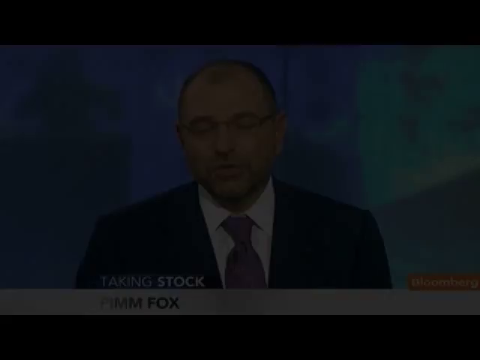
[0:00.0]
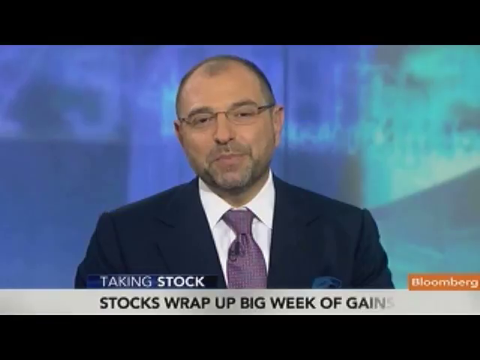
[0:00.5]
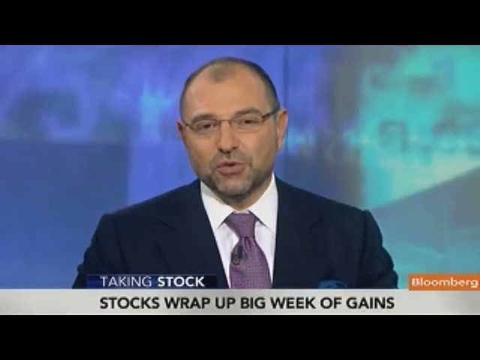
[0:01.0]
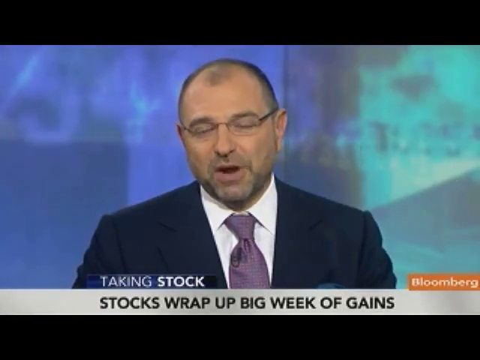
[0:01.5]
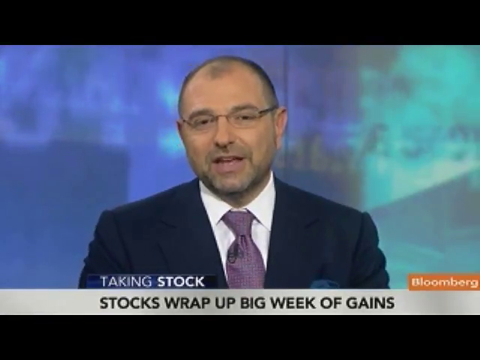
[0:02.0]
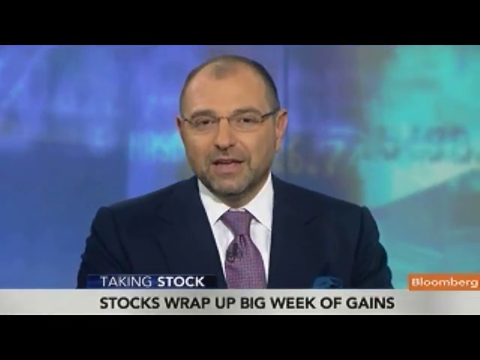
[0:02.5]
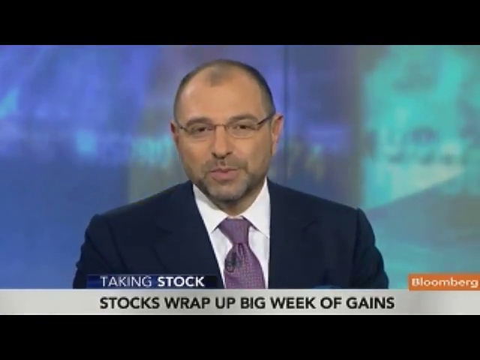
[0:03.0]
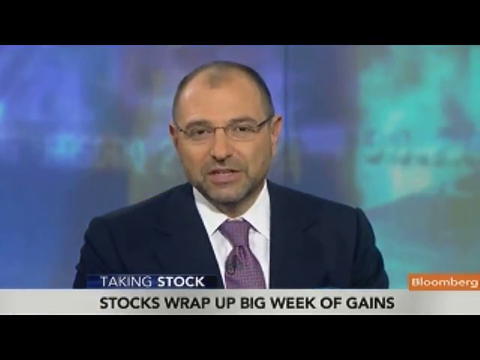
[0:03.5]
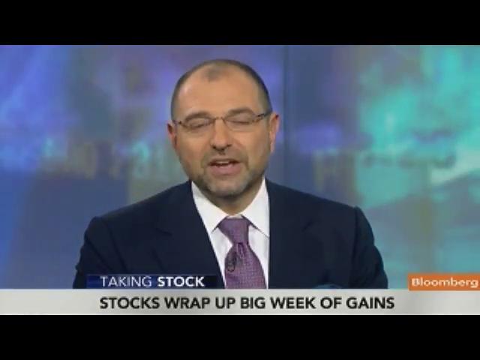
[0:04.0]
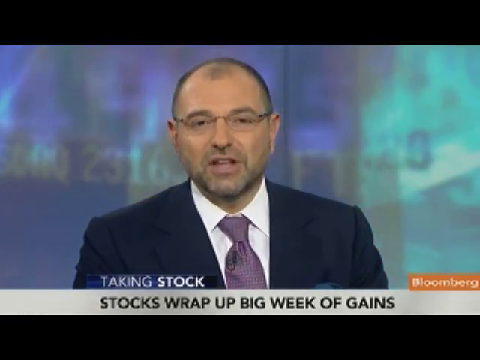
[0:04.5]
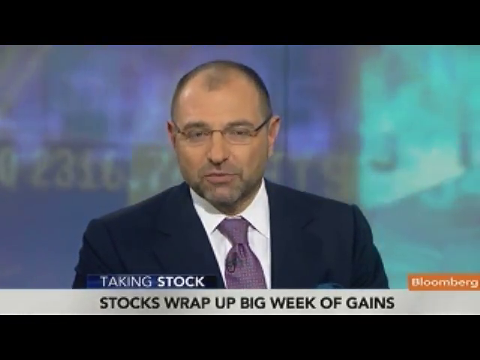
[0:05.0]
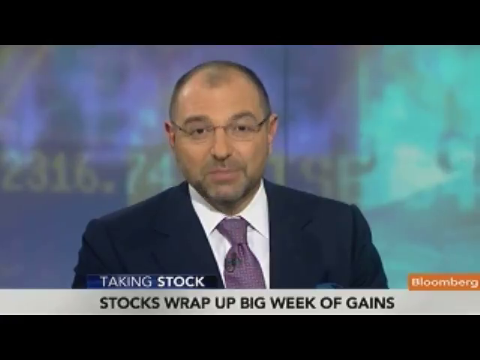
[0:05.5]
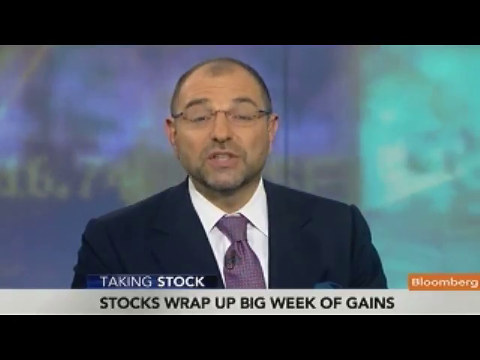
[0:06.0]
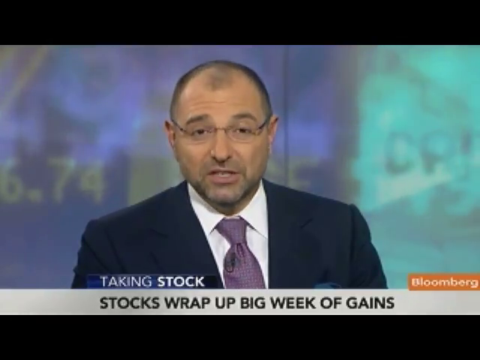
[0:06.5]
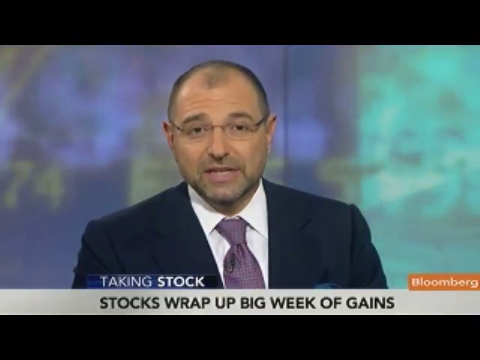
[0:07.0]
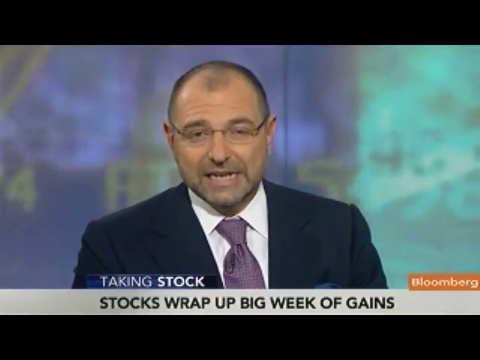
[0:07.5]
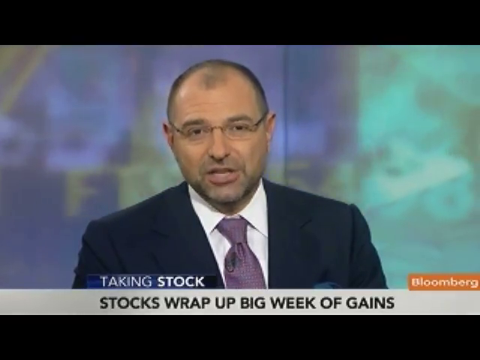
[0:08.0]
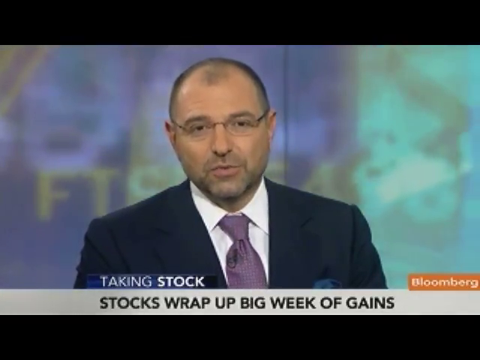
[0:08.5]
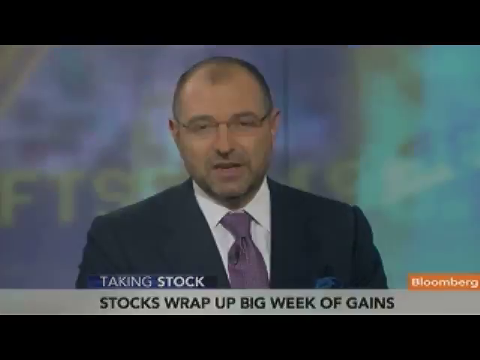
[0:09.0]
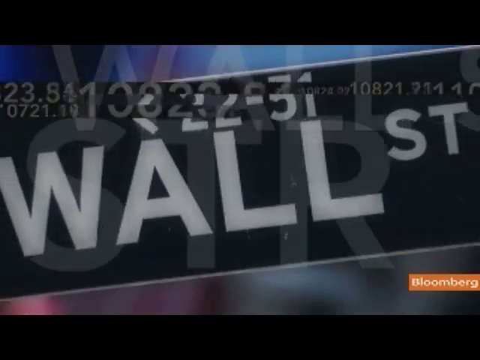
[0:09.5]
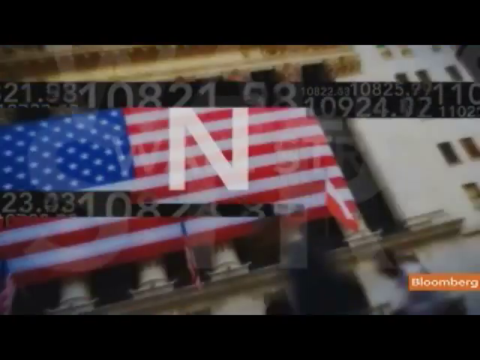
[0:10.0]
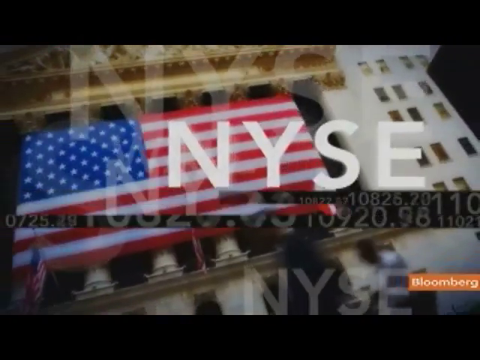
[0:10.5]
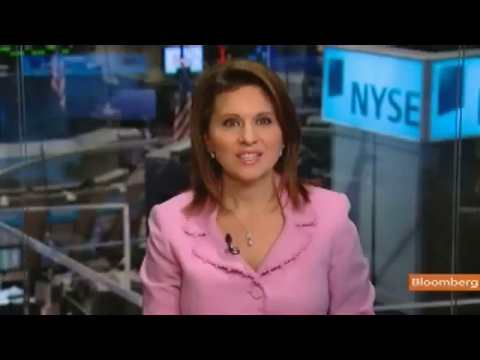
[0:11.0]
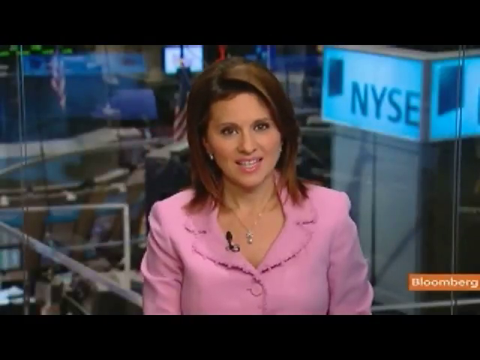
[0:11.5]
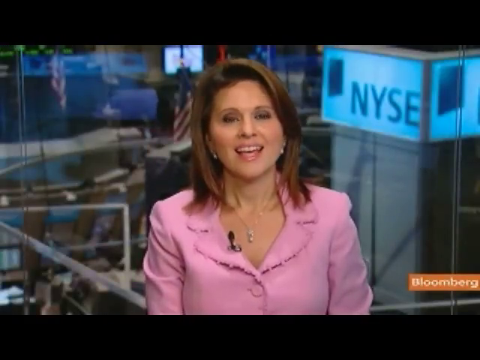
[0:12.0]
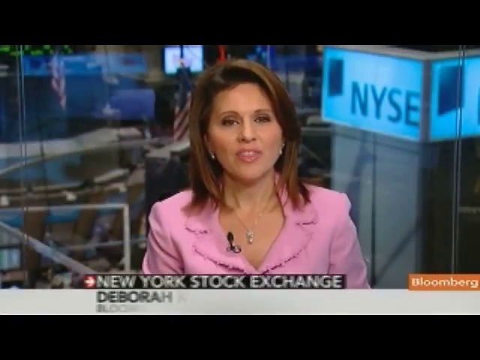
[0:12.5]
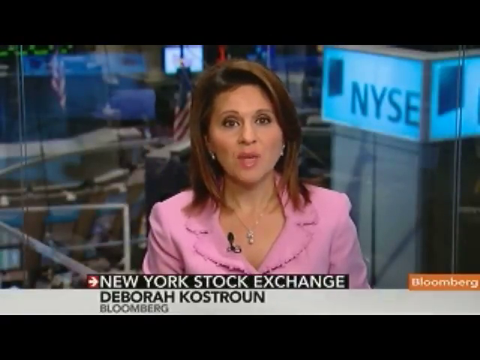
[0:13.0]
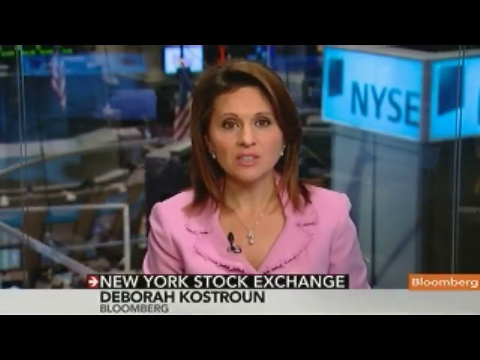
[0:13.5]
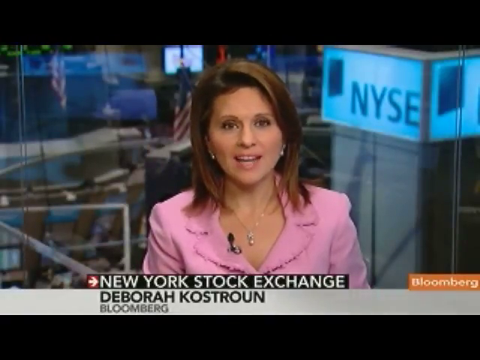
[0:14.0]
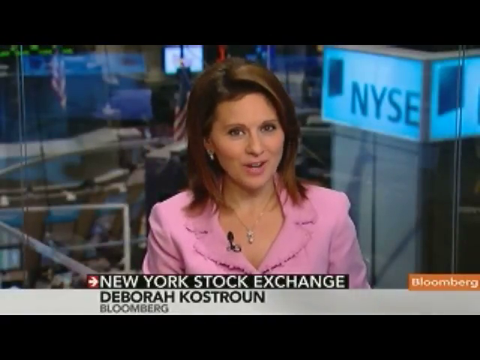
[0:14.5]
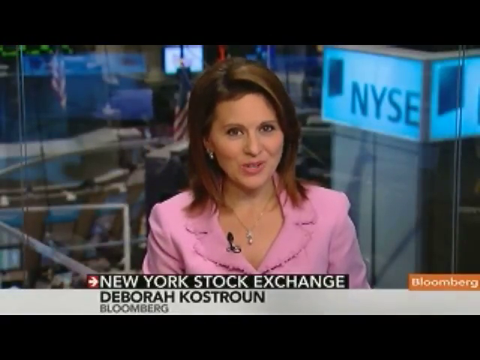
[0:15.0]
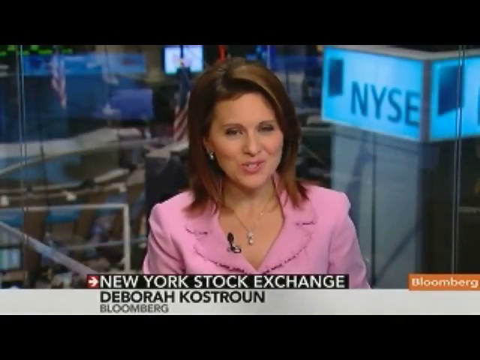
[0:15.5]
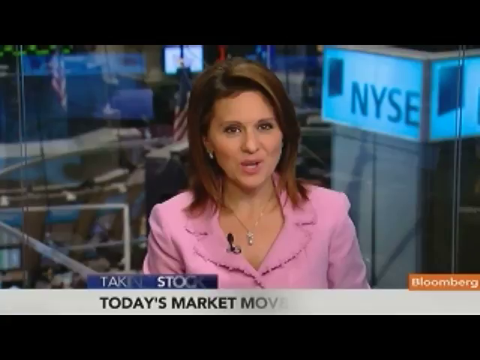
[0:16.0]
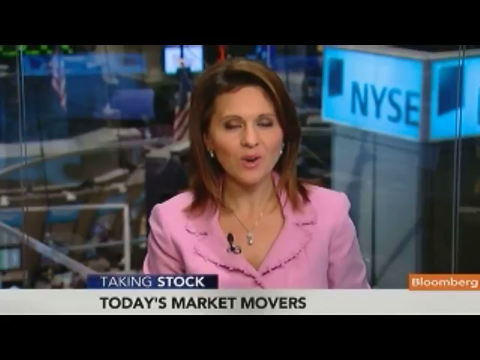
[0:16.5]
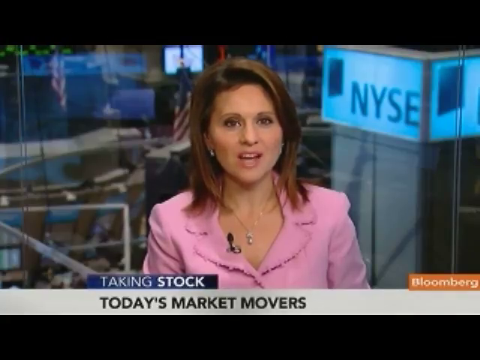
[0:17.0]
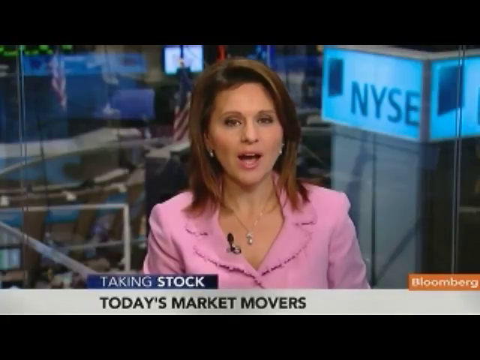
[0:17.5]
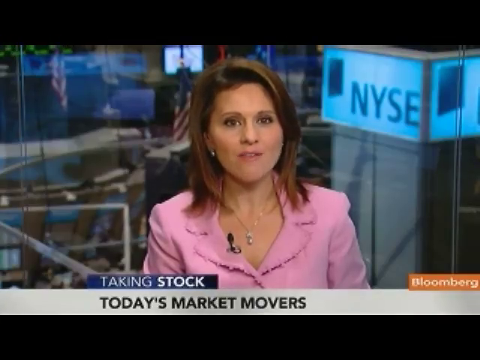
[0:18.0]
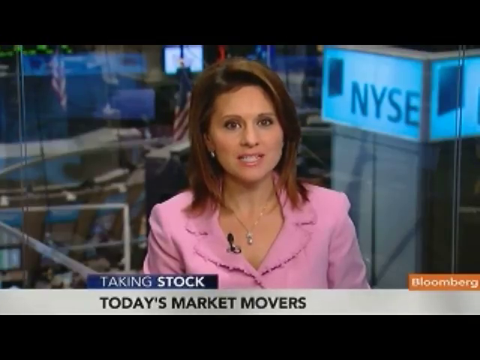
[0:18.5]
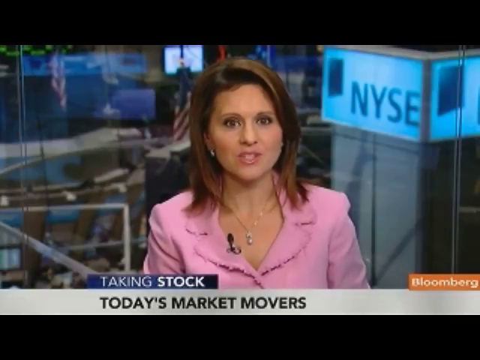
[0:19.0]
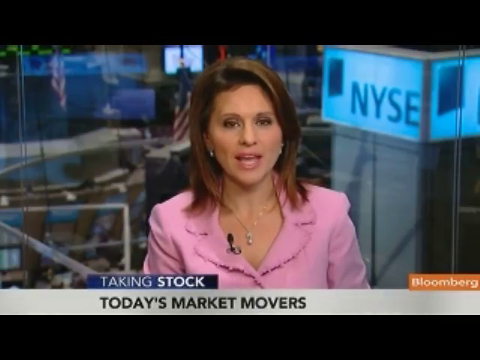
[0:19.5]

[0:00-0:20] A Bloomberg newscast opens on a man wearing glasses, a dark jacket, a purple tie and a white shirt, talking to the camera. Behind him is a blue screen with various colors. A title at the bottom reads "taking stock" and below it "stocks wrap up big week of gains." On the right at the bottom is the Bloomberg logo, an orange rectangle. The graphics then change to show Wall Street and New York, with an American flag. Next a woman in a pink blouse appears; text at the bottom identifies her as "Deborah Kostroun" and reads "New York Stock Exchange." Behind her is a graphic with a photo of the NYSE. She is also in the newsroom, with offices visible behind her. The text reads "taking stock" and below it "today's market movers." She has a microphone attached to her pink jacket.